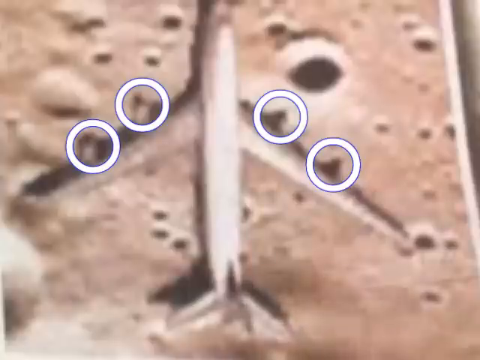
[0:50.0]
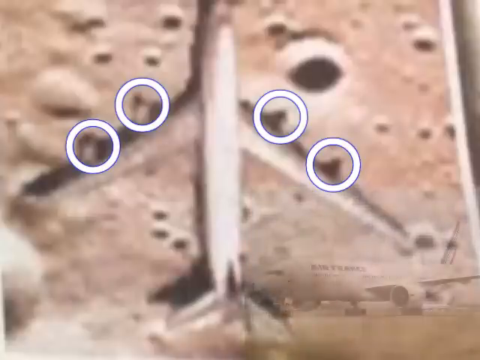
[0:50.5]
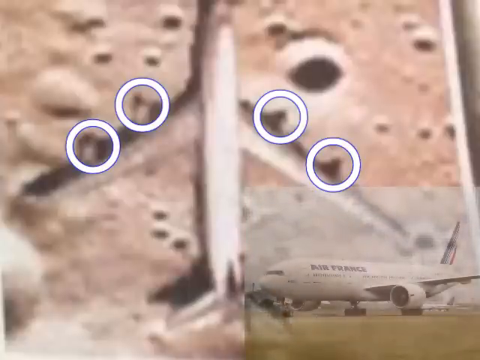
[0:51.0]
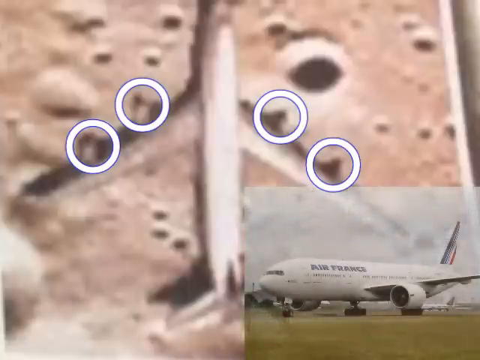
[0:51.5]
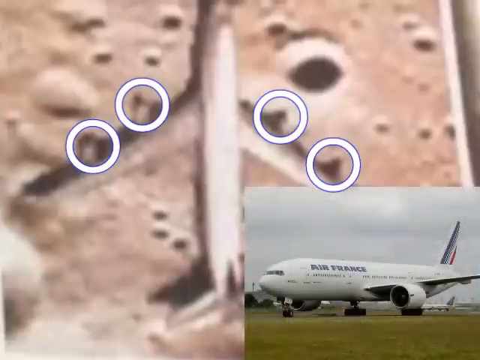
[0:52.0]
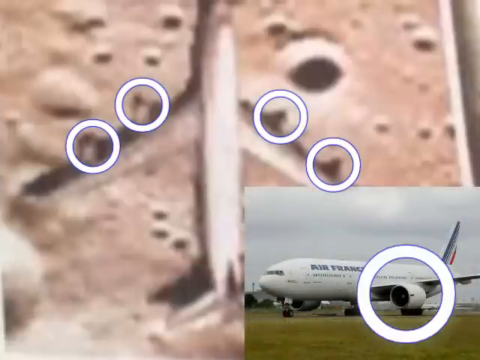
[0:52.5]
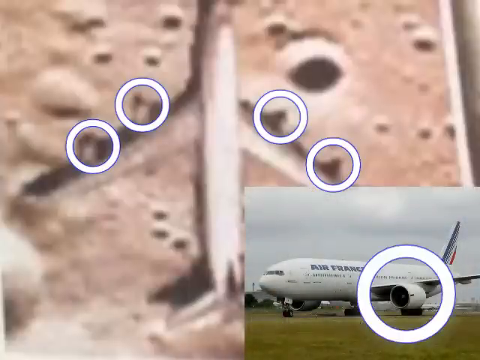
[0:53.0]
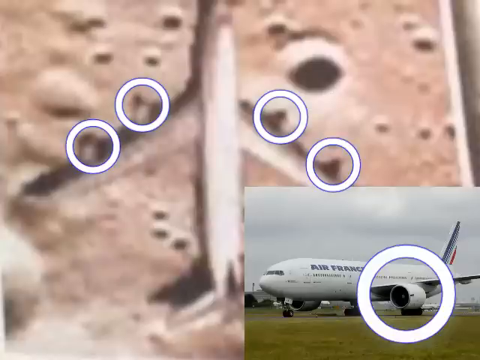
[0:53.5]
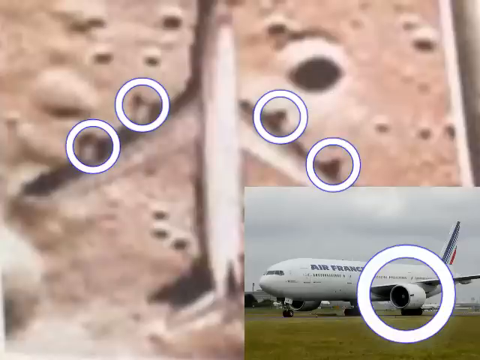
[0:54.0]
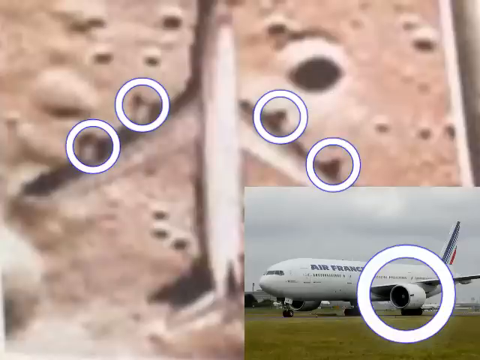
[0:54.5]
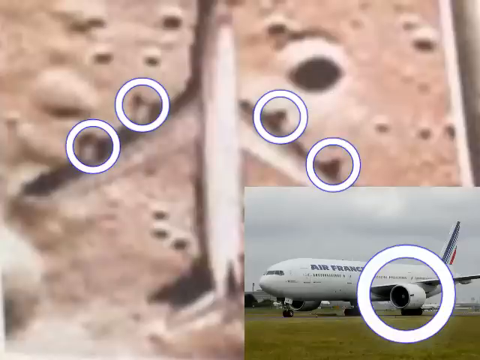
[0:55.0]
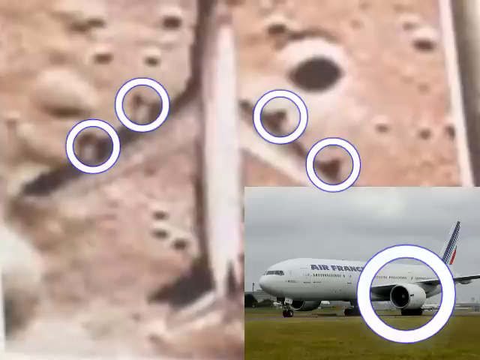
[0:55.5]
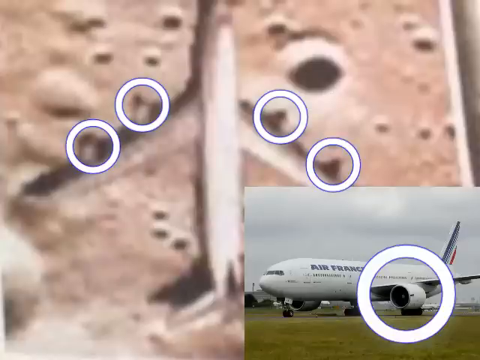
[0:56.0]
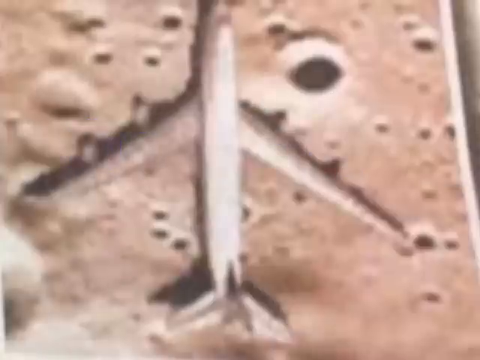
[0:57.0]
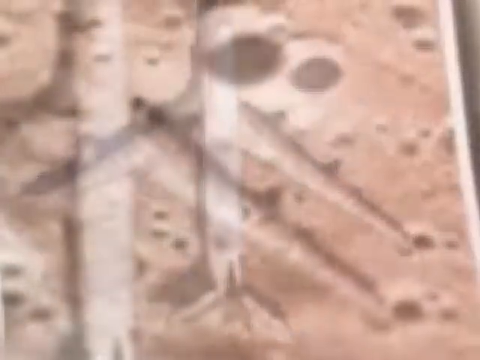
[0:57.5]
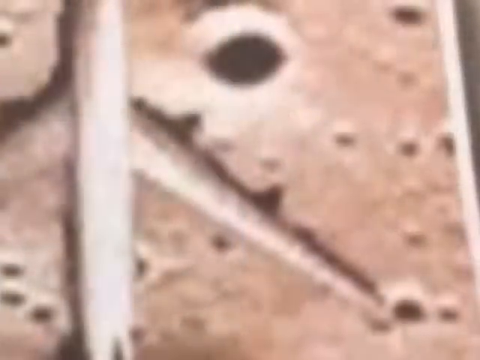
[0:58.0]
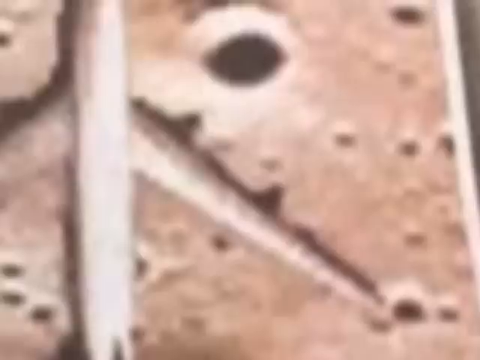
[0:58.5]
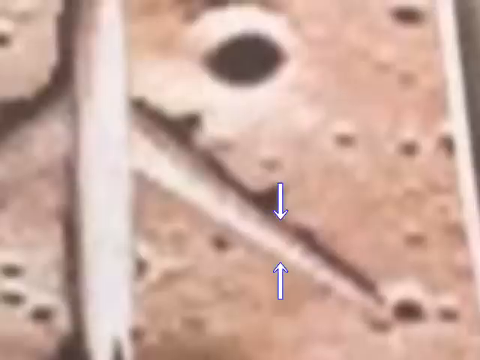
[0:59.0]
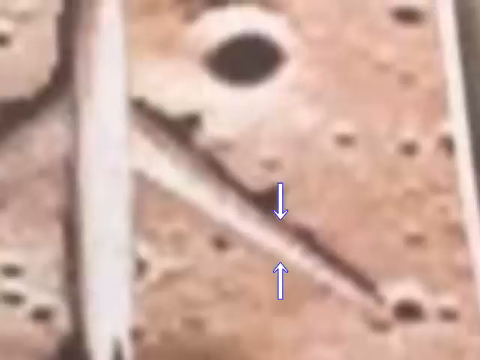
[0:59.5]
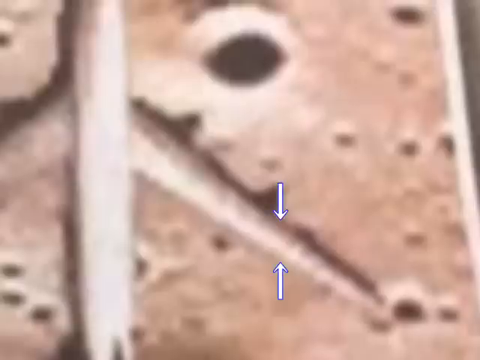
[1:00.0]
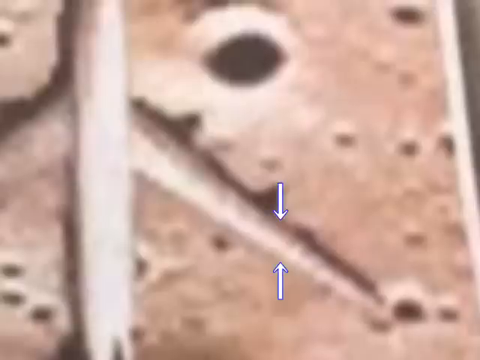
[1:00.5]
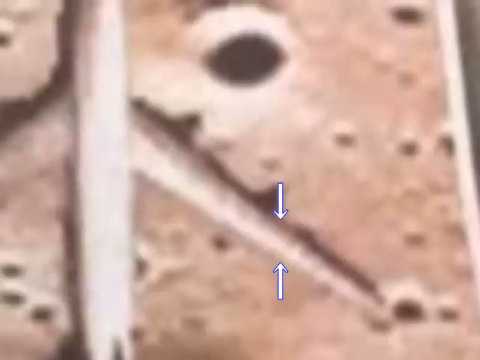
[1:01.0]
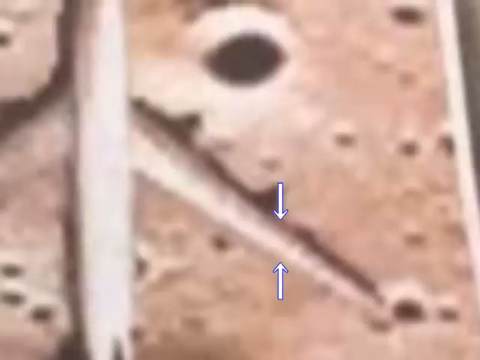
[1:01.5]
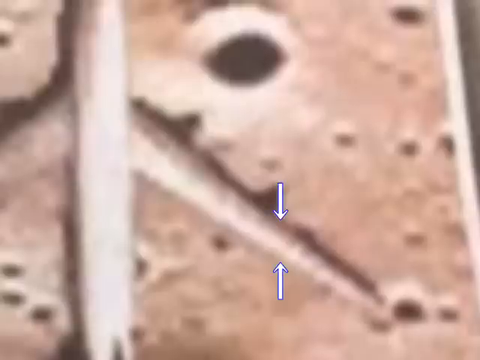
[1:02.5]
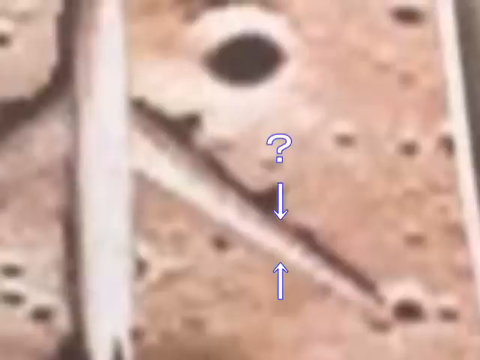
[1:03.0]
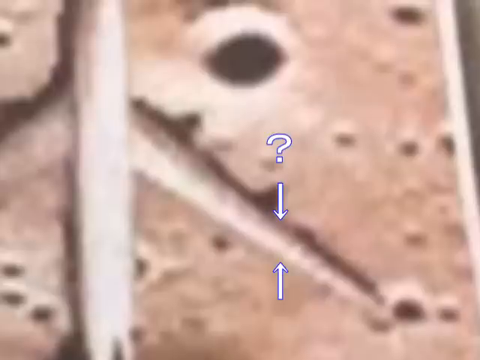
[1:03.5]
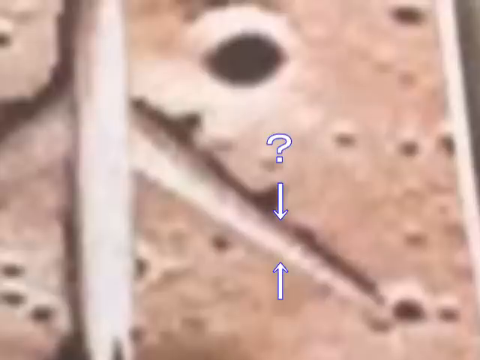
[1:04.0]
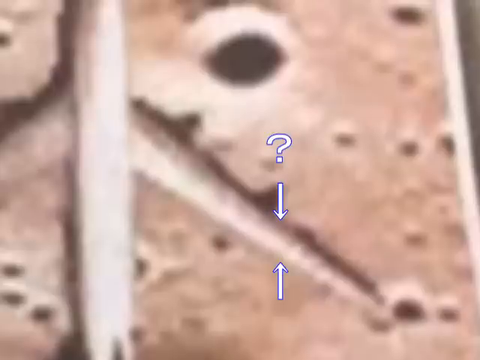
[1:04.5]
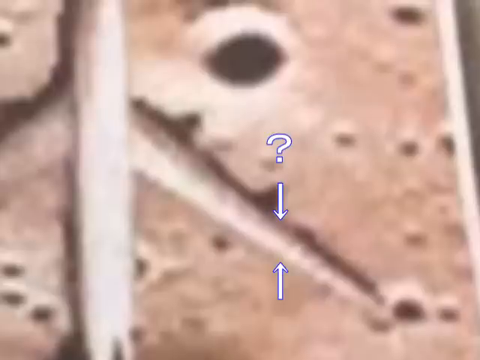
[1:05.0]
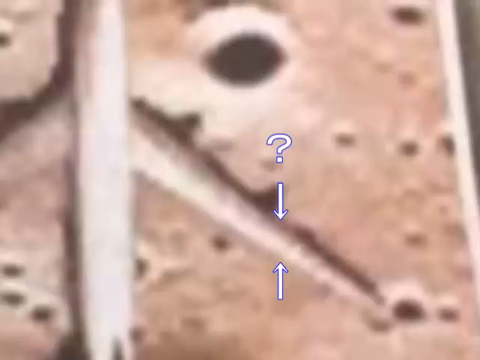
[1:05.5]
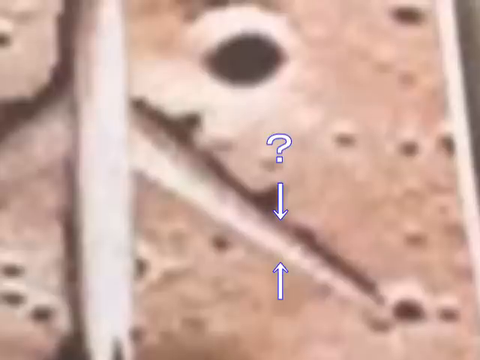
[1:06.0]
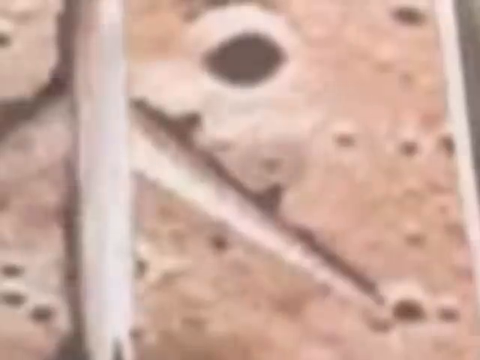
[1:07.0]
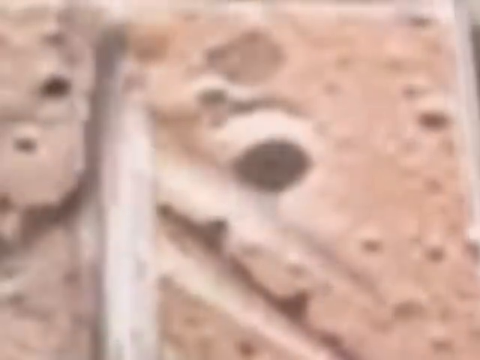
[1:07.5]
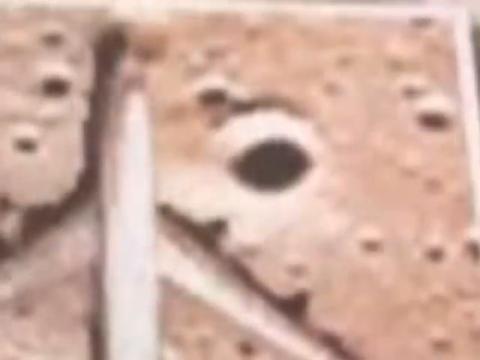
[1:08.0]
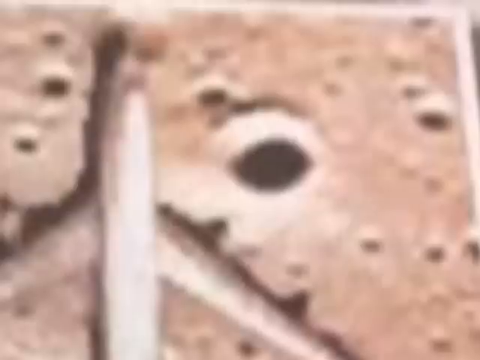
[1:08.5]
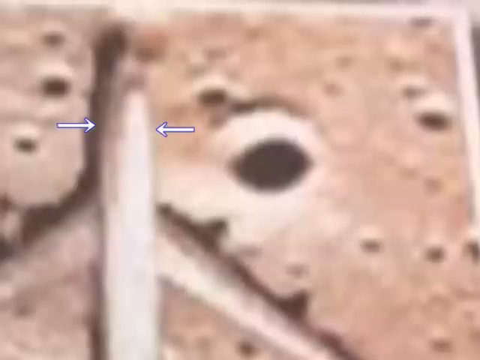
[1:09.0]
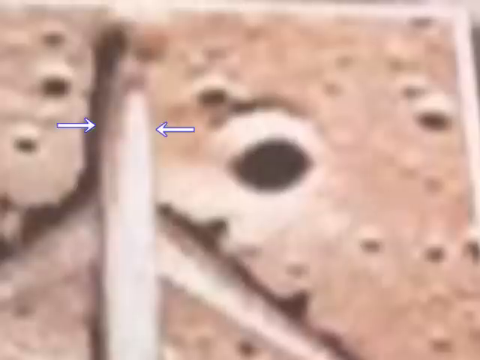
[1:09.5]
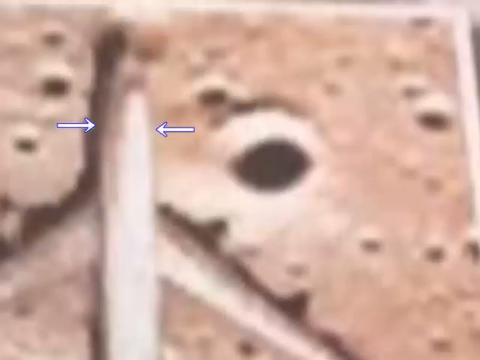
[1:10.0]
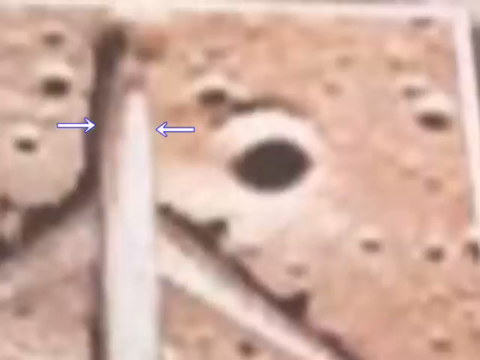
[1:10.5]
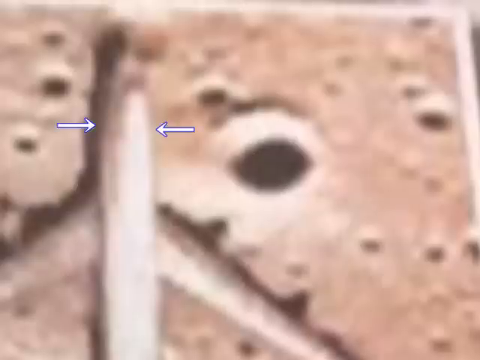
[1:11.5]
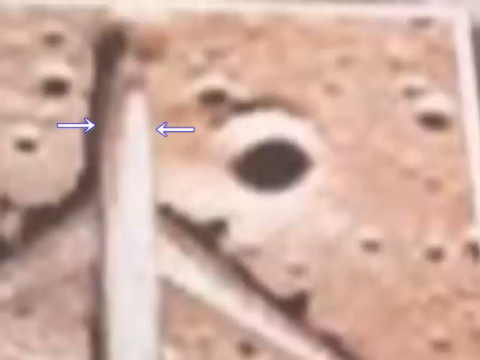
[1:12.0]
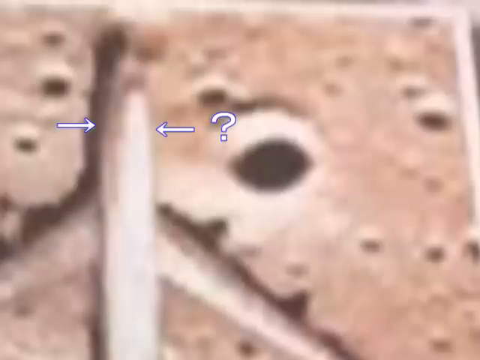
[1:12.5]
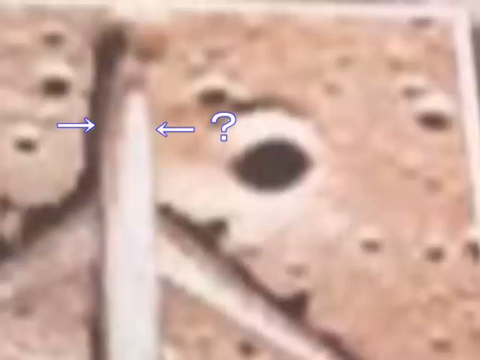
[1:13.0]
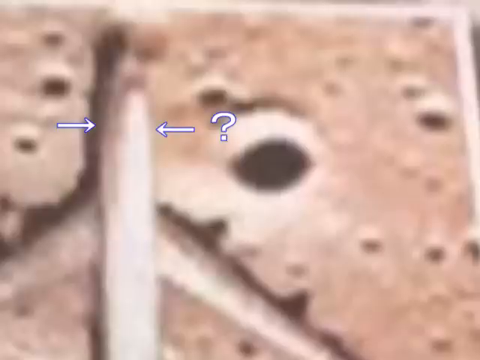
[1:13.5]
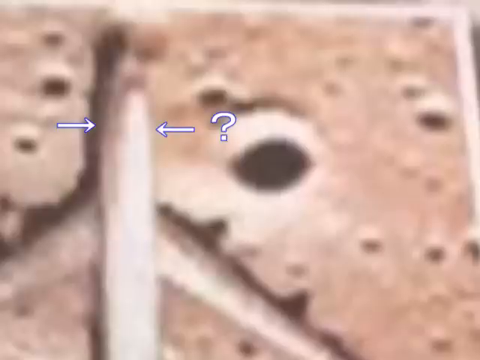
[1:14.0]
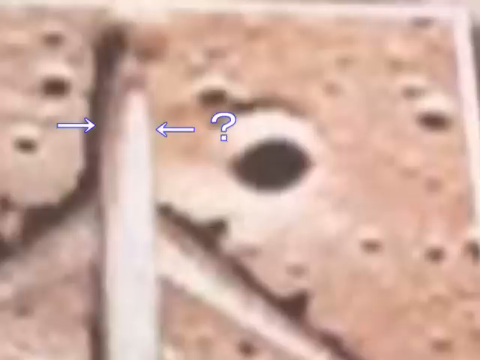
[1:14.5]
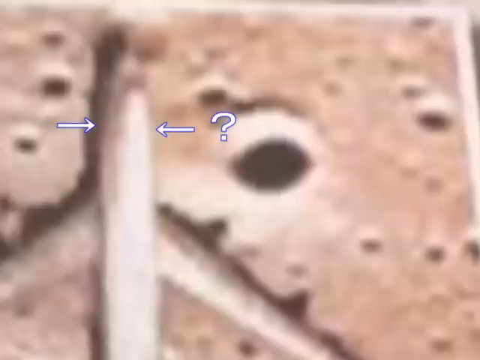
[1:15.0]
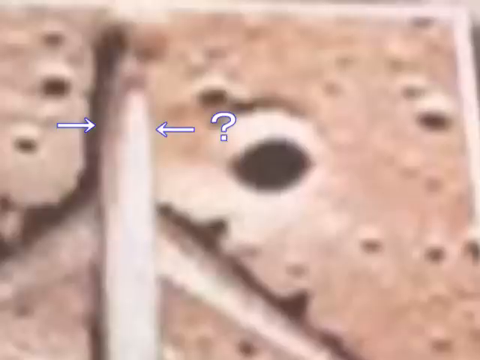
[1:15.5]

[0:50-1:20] An up-close image of the airplane shows four circles around a kind of obscured image of the plane on the moon, marking four jet engines. In the bottom right-hand corner is a plane labeled "Air France," a big Boeing plane, with a much bigger circle focused on its jet engines. Two arrows with a question mark point at the side of one of the wings, and two arrows with a question mark point at the front fuselage. The graphics appear to compare the plane on the moon with the actual Air France plane.